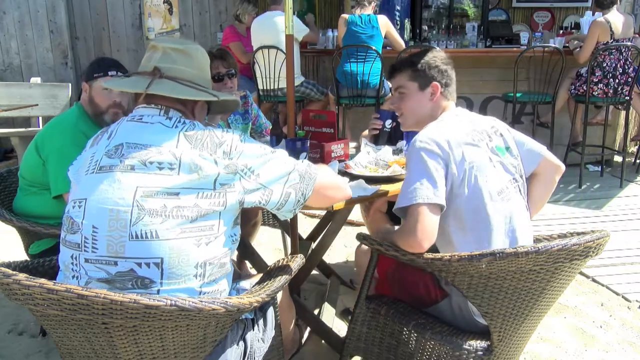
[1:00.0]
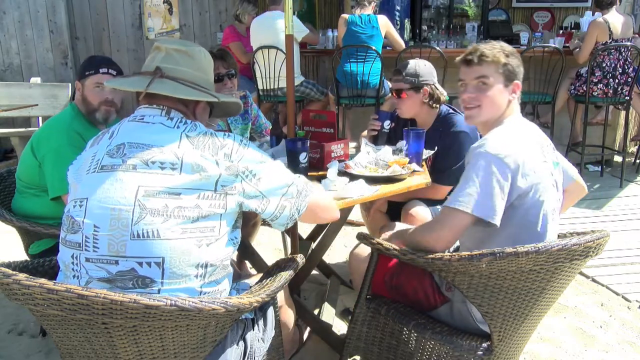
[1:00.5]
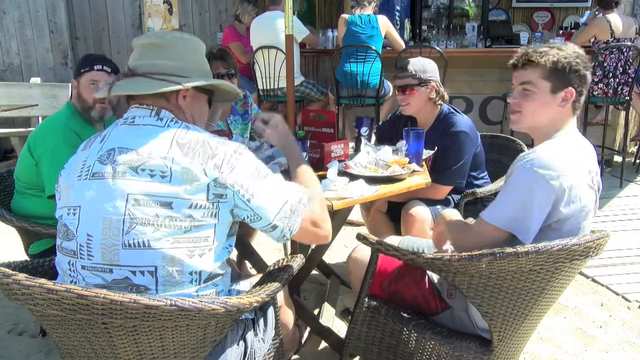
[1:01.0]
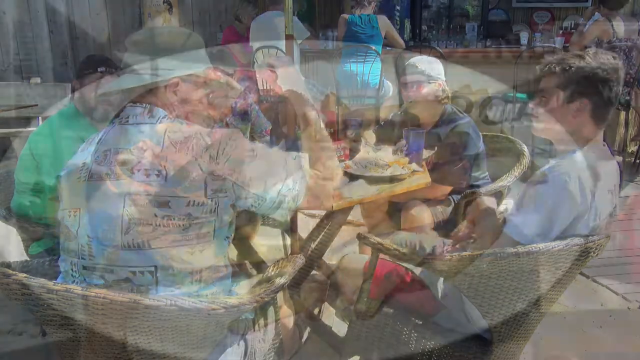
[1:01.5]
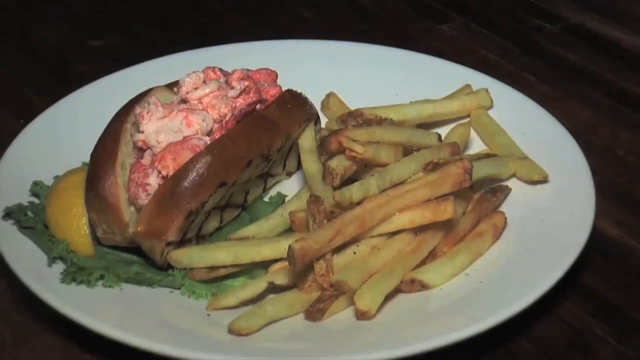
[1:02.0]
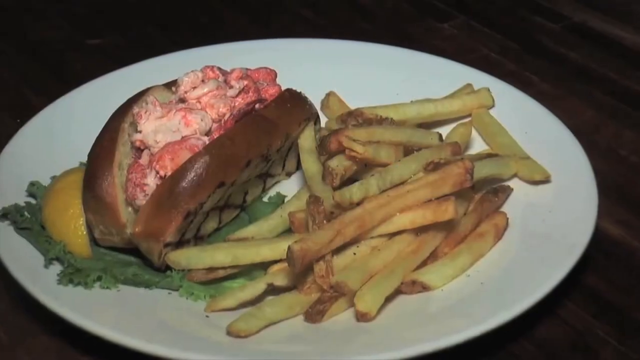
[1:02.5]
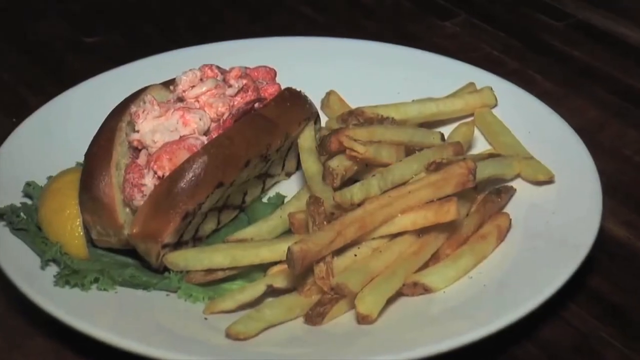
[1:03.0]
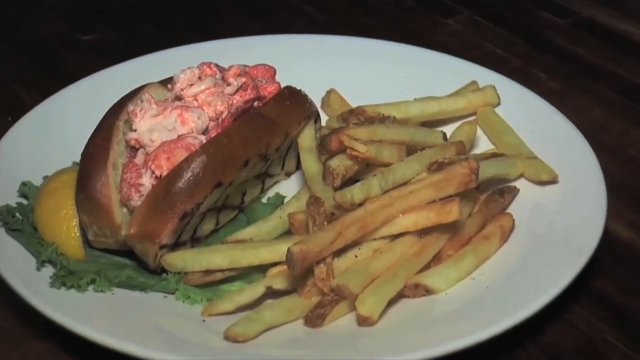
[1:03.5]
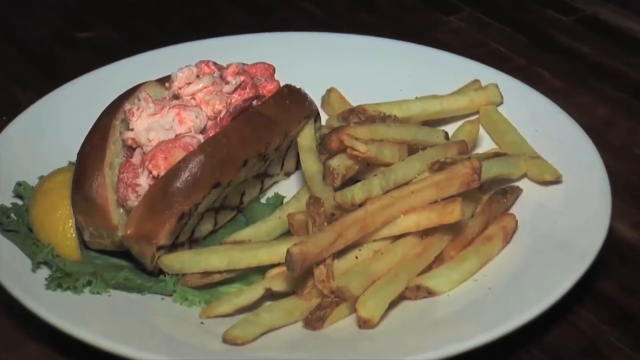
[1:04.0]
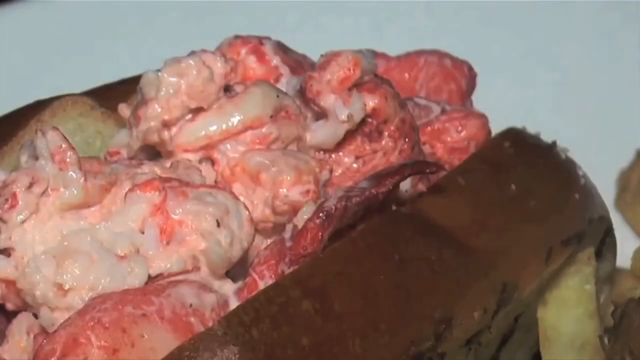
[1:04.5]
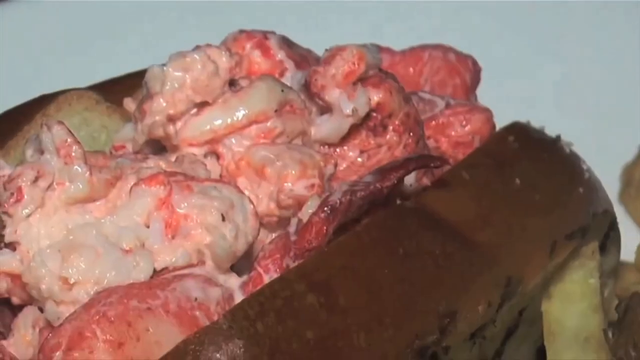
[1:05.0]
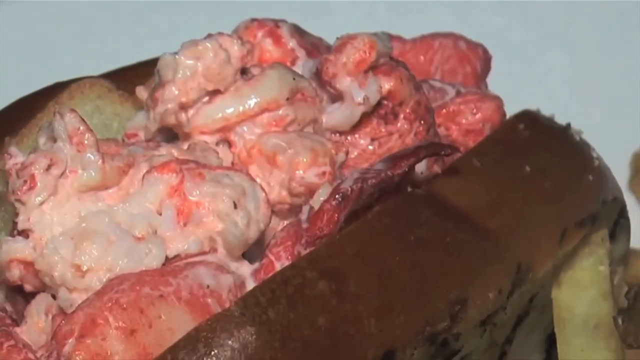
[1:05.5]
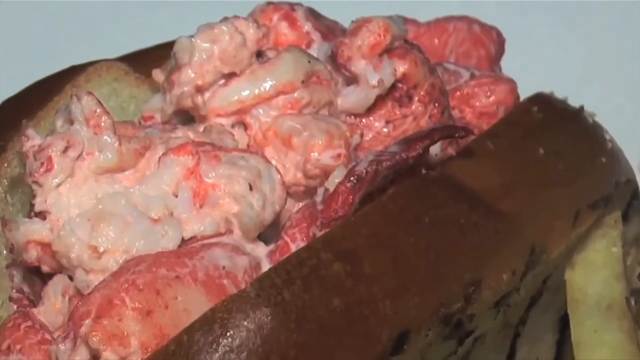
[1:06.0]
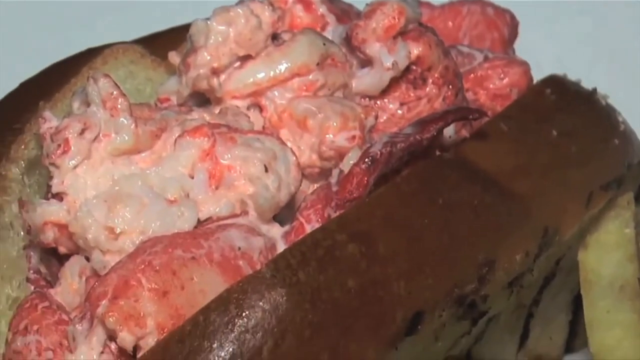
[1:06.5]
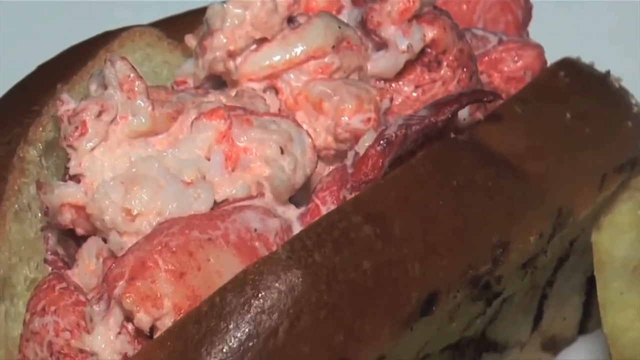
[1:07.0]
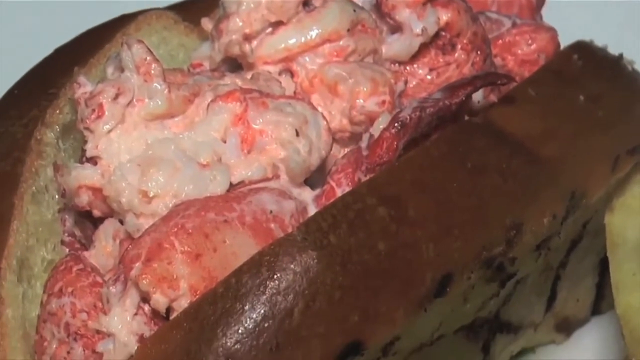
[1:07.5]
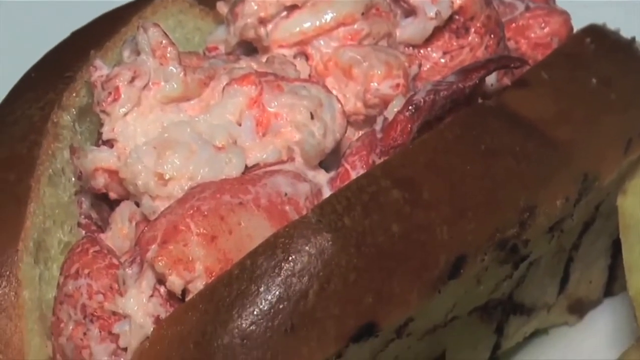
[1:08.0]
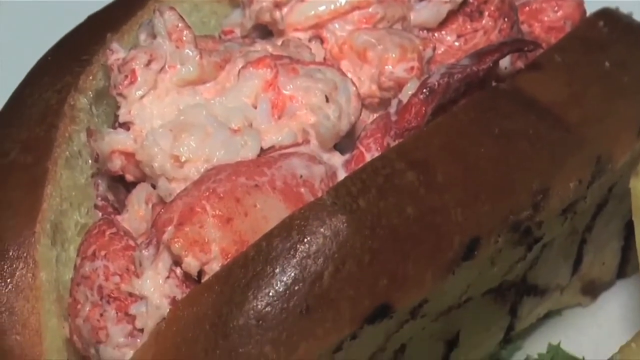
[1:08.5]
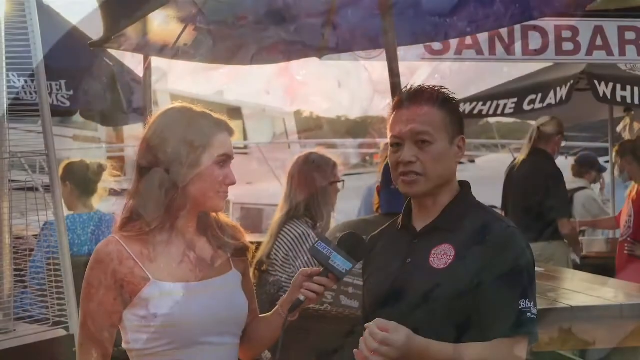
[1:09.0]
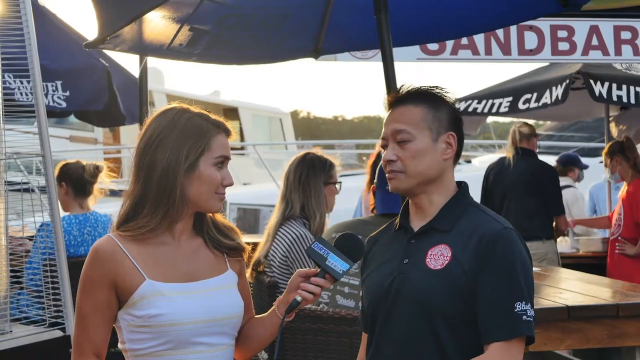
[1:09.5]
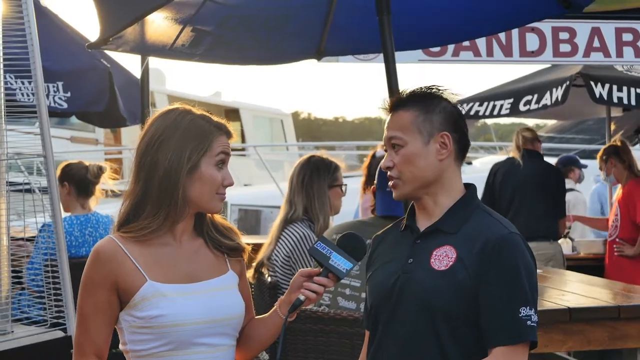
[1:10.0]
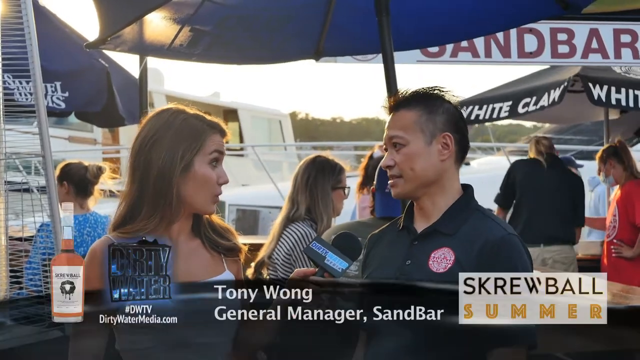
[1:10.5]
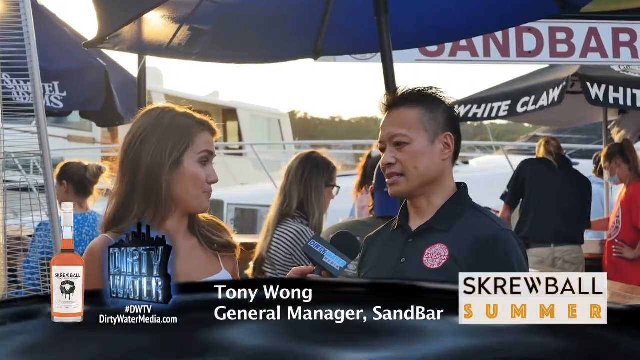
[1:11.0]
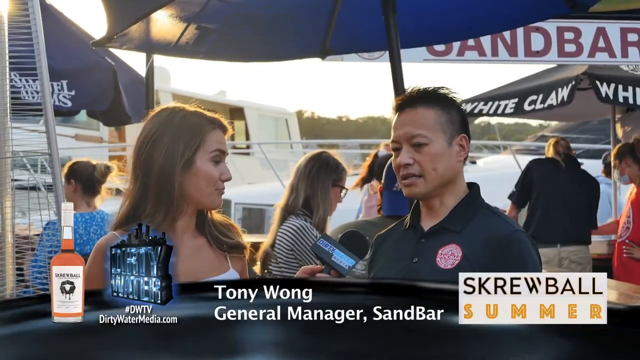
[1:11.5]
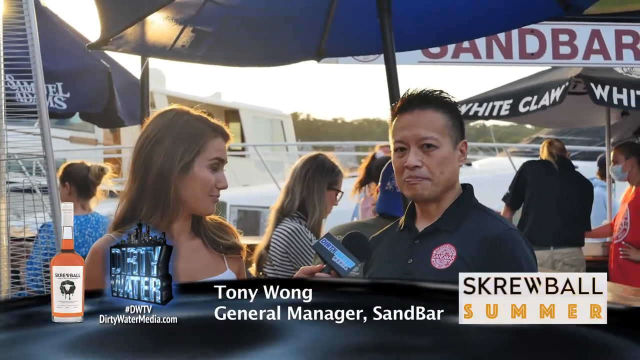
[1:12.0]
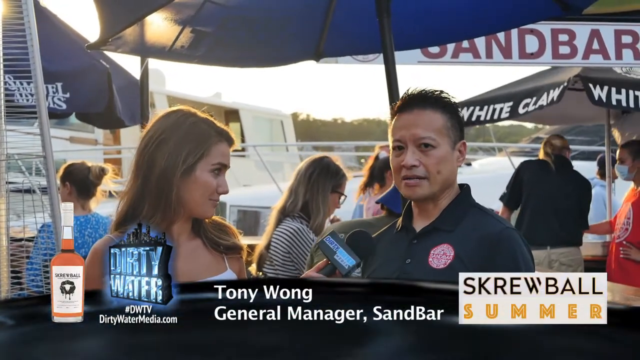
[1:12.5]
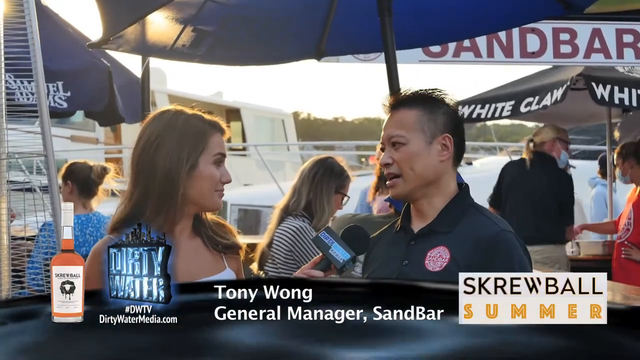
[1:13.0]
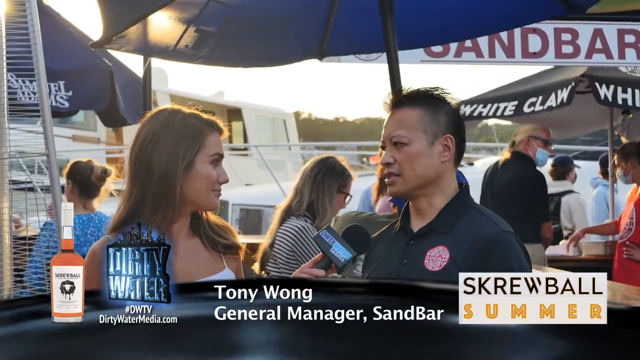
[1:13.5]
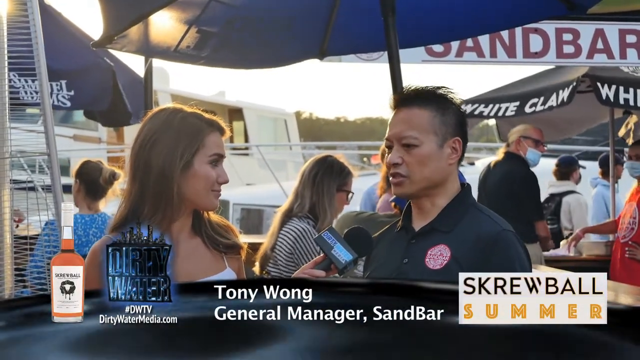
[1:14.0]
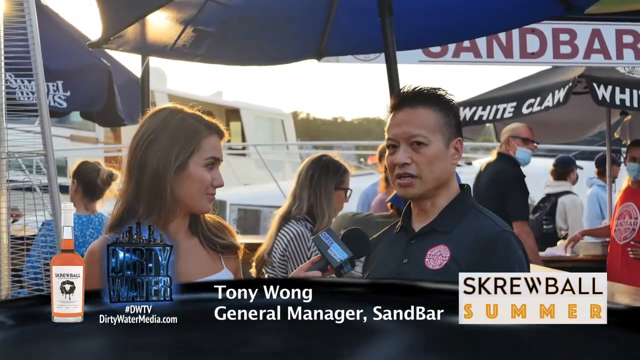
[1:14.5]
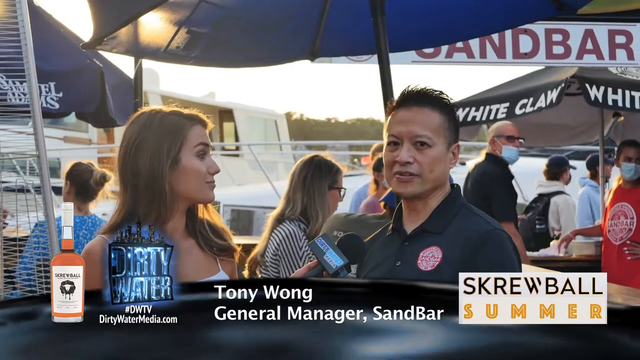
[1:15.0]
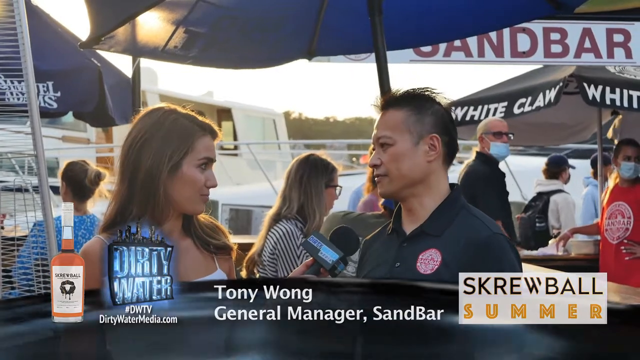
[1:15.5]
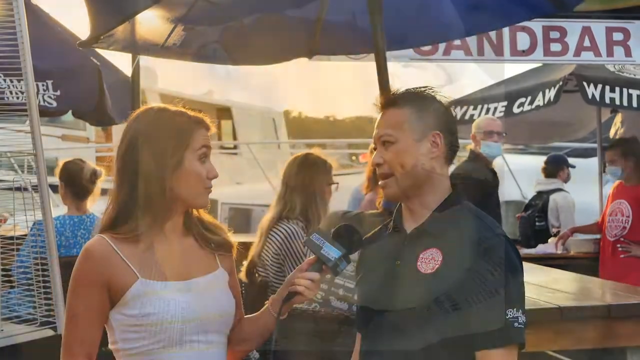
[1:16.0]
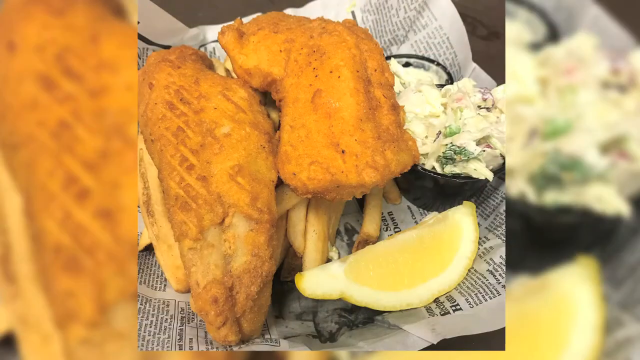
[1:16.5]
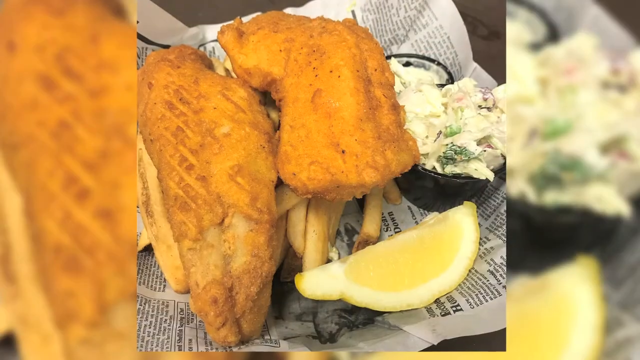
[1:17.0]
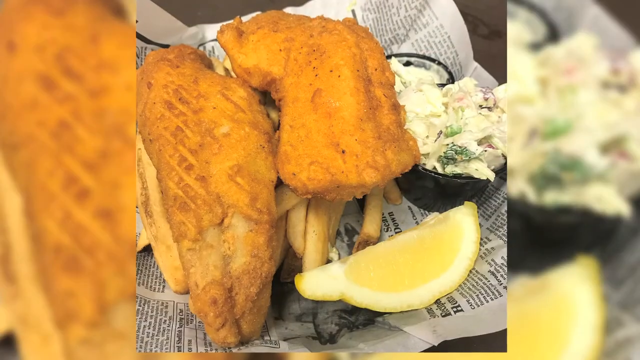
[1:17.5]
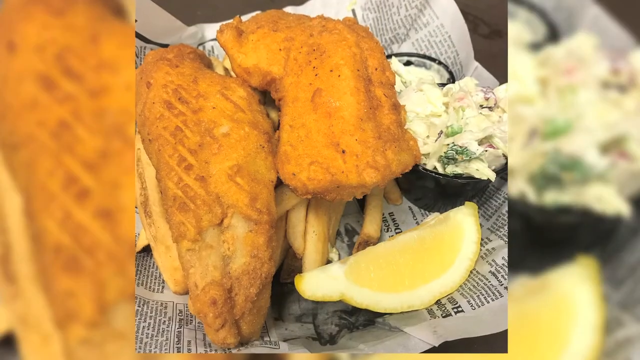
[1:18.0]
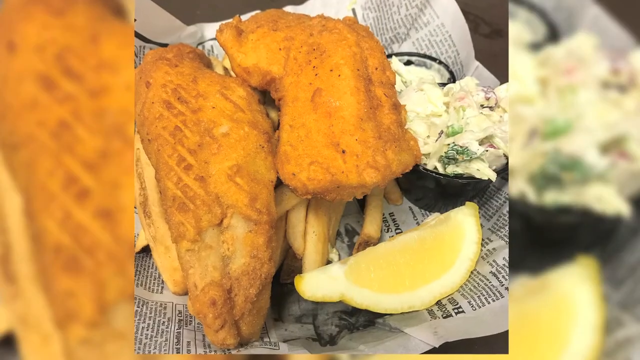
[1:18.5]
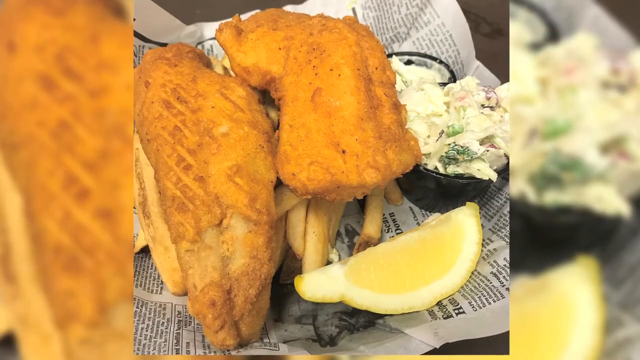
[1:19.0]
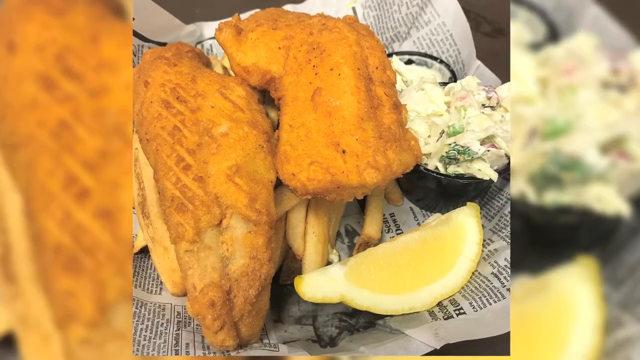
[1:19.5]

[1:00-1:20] Tourists sit under an umbrella, chatting and laughing. Next there is a meal on a white plate that seems to consist of fries and a burger with red meat, with something yellow-orange on the side; the food looks delicious. Then the reporter interviews a man on the beach named Tony Wong, the general manager of the Sandbar, with boats in the background; he seems to be explaining about the bar in general. The scene then cuts to roasted chicken served on a newspaper with lemon and a salad on the side.